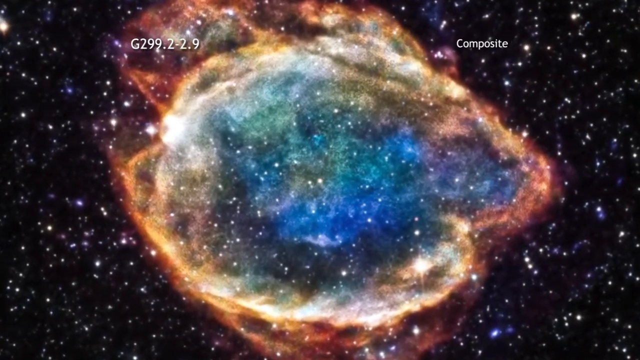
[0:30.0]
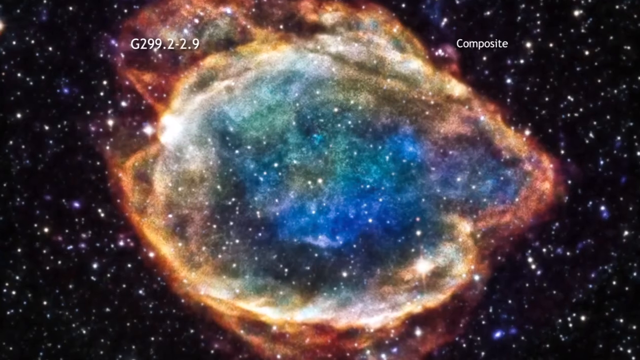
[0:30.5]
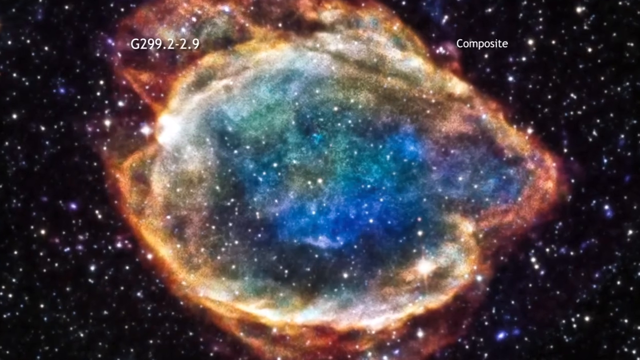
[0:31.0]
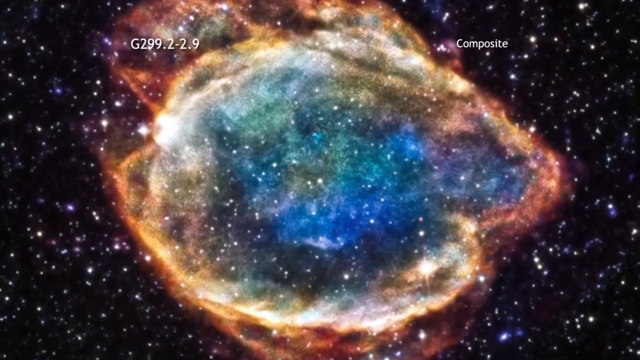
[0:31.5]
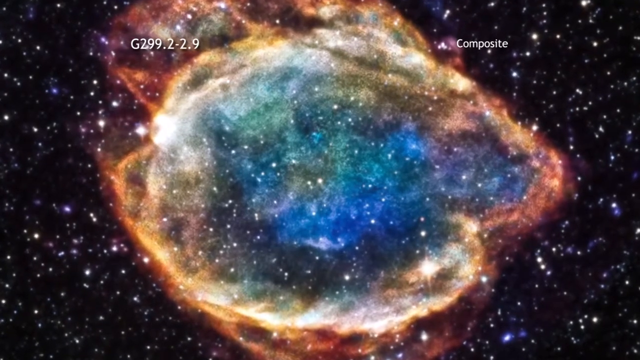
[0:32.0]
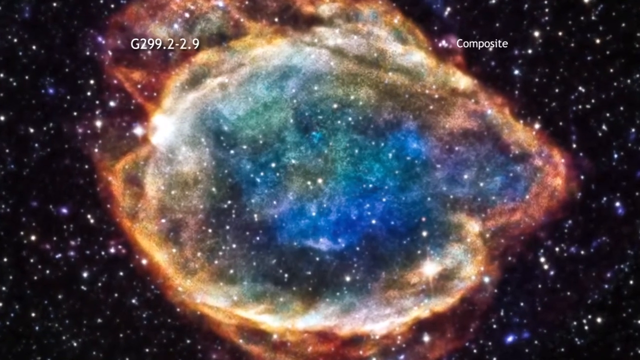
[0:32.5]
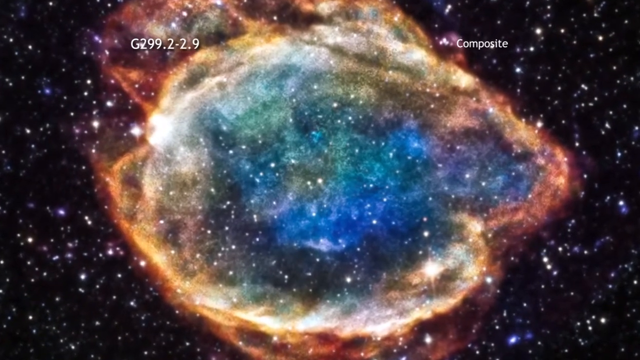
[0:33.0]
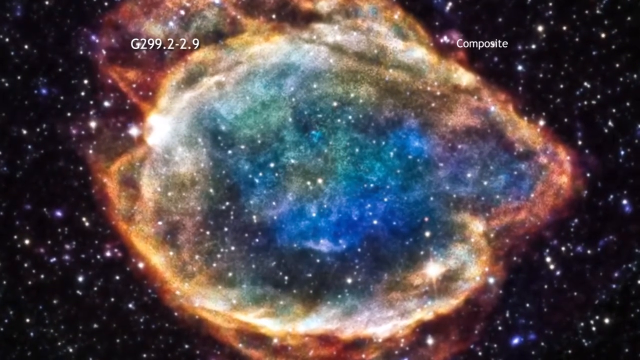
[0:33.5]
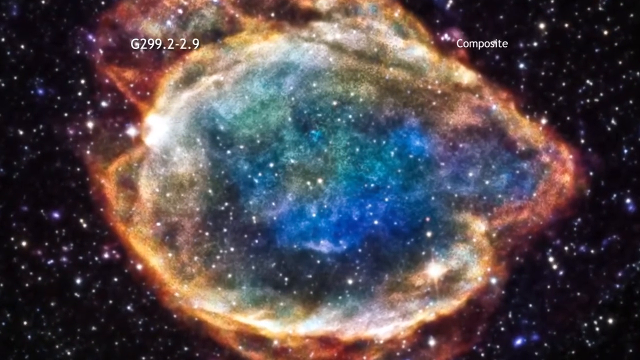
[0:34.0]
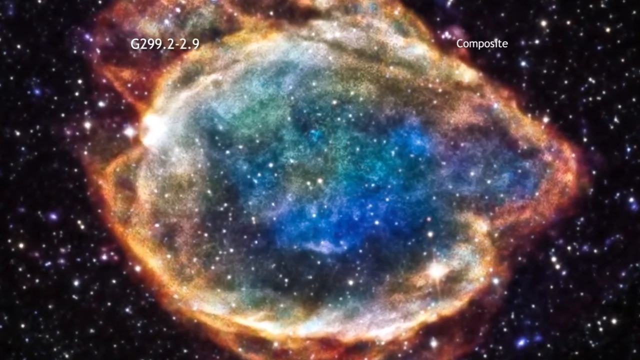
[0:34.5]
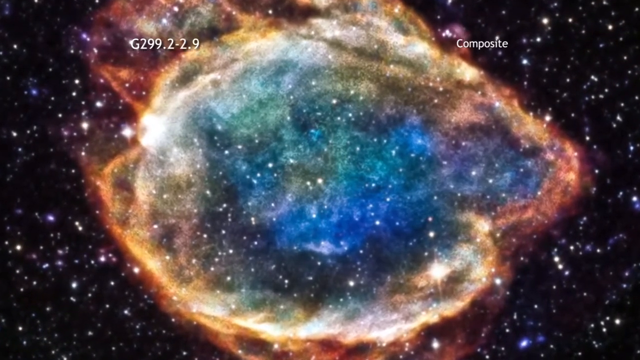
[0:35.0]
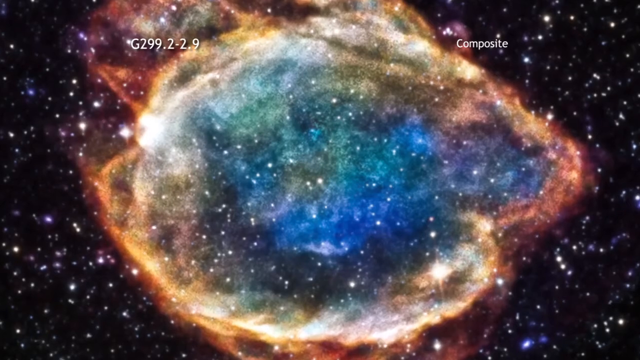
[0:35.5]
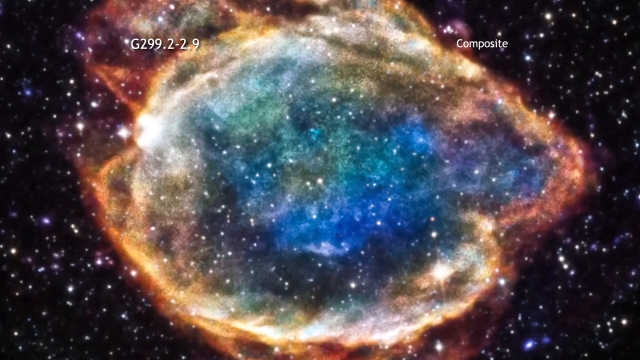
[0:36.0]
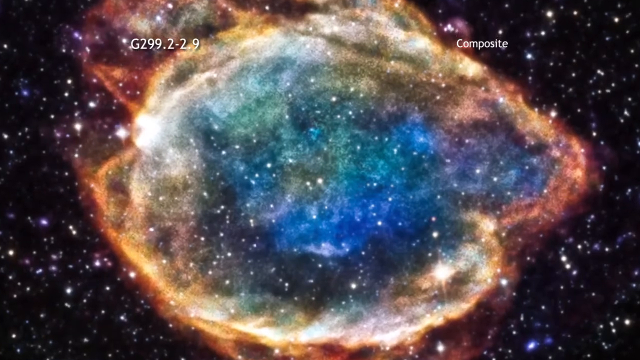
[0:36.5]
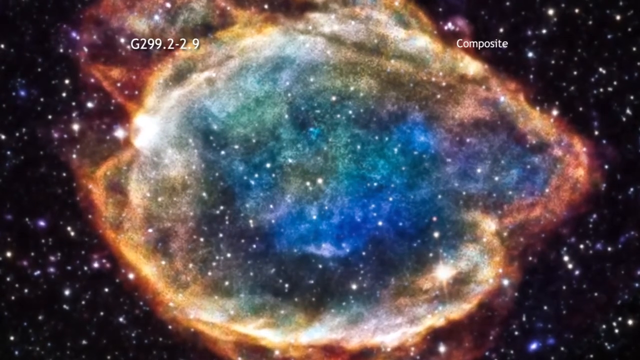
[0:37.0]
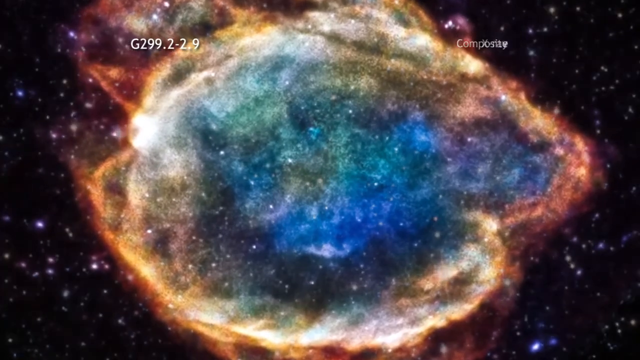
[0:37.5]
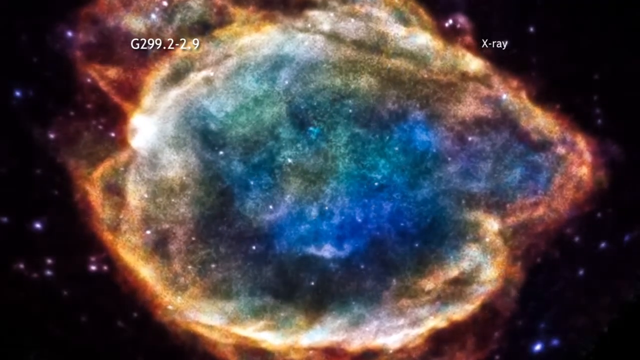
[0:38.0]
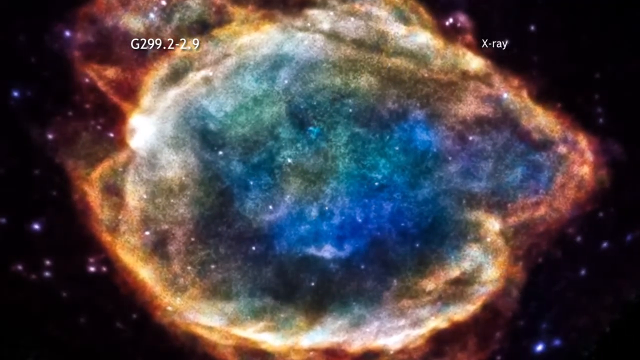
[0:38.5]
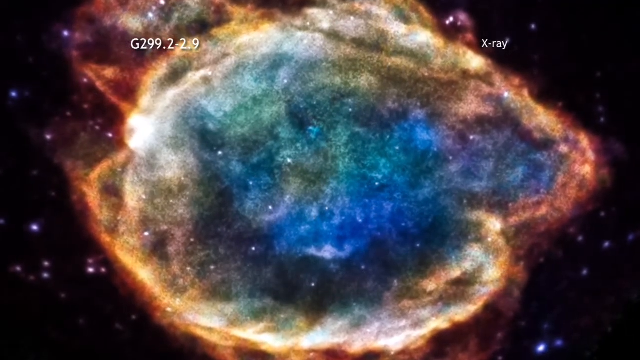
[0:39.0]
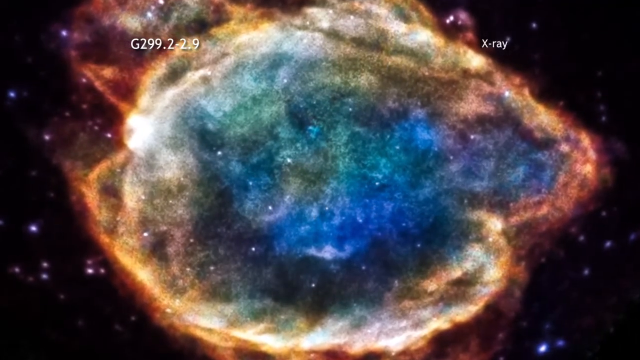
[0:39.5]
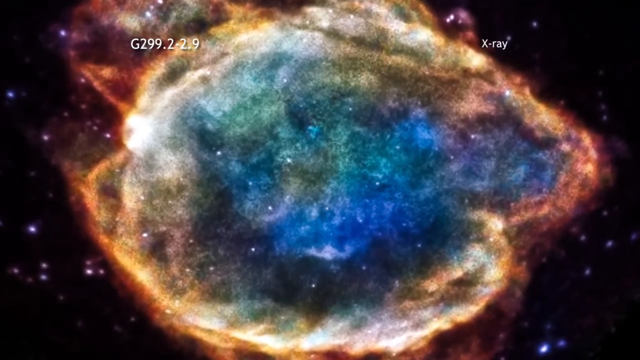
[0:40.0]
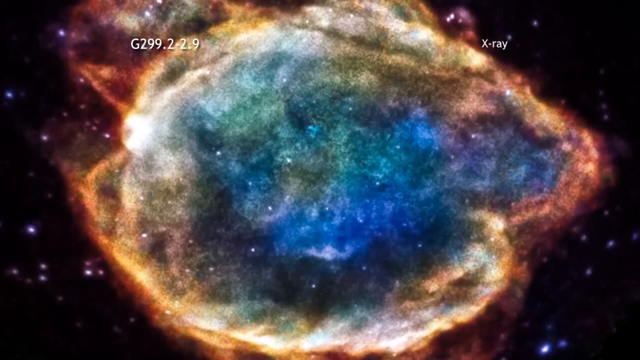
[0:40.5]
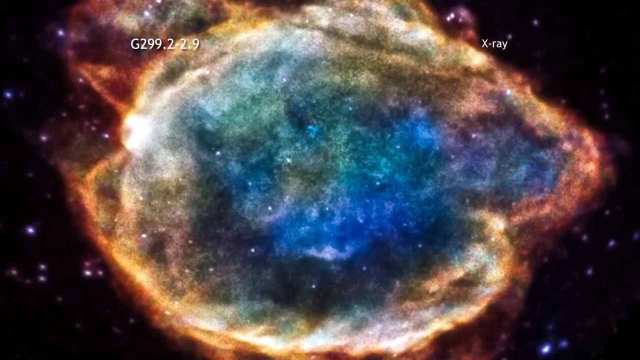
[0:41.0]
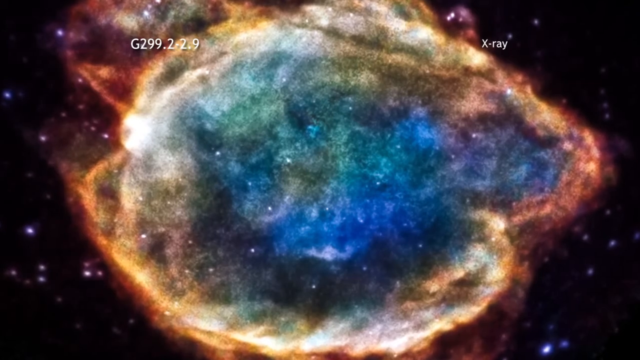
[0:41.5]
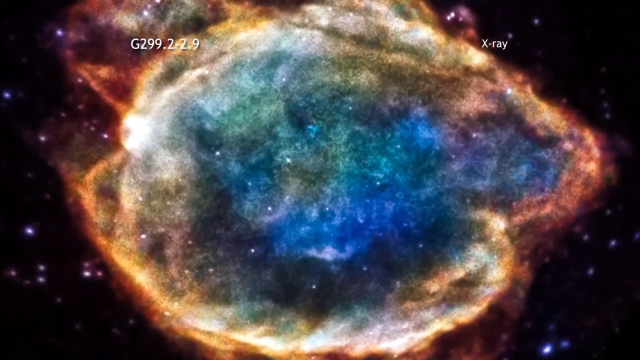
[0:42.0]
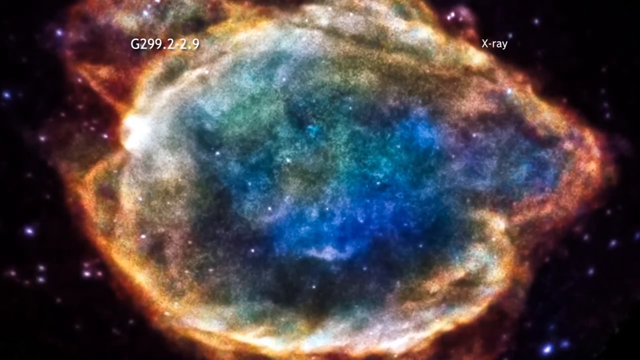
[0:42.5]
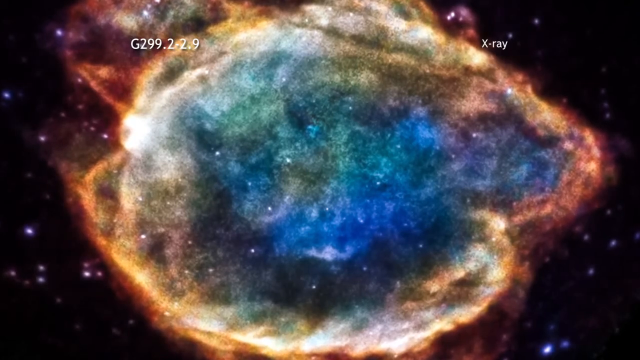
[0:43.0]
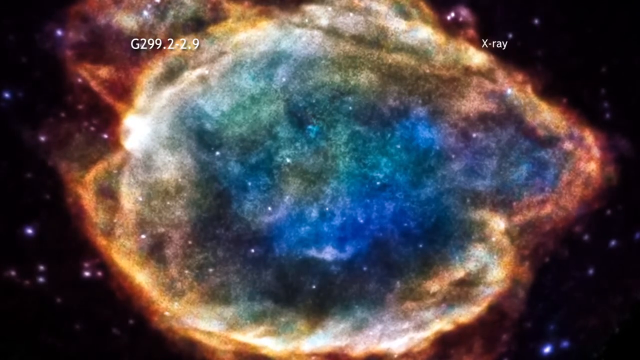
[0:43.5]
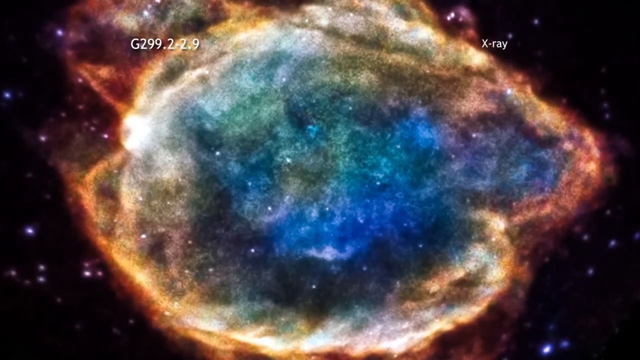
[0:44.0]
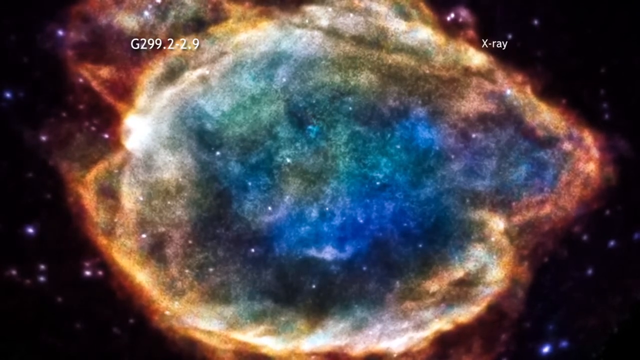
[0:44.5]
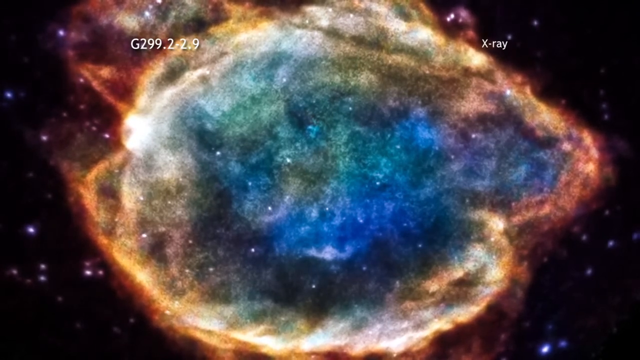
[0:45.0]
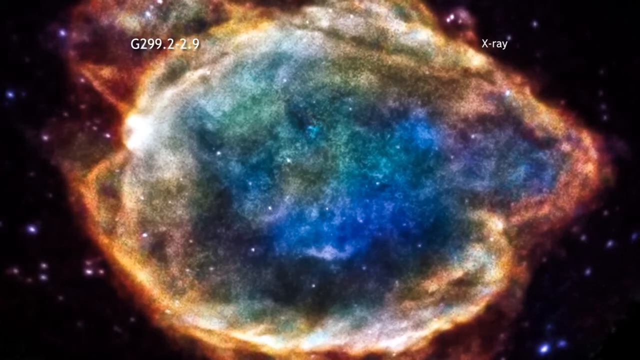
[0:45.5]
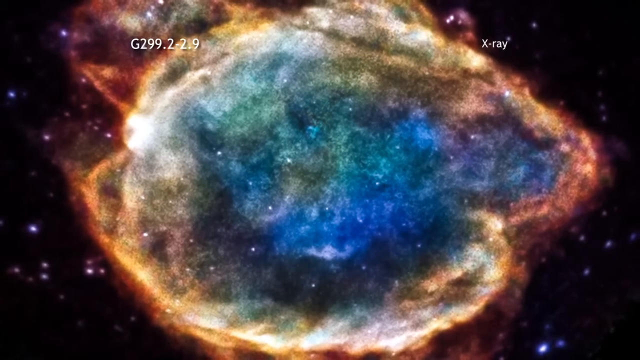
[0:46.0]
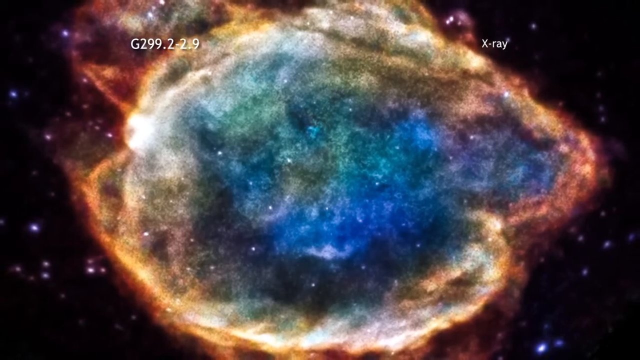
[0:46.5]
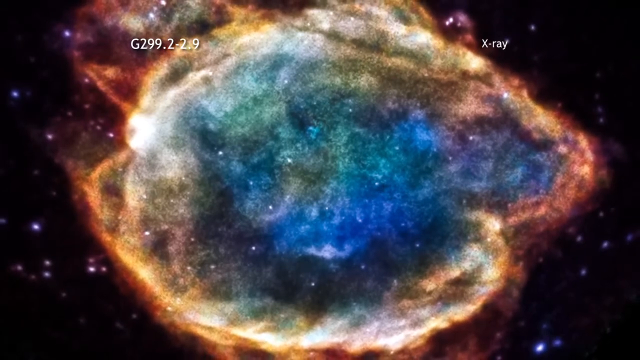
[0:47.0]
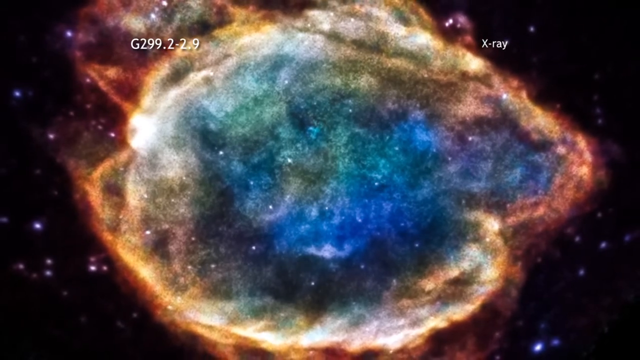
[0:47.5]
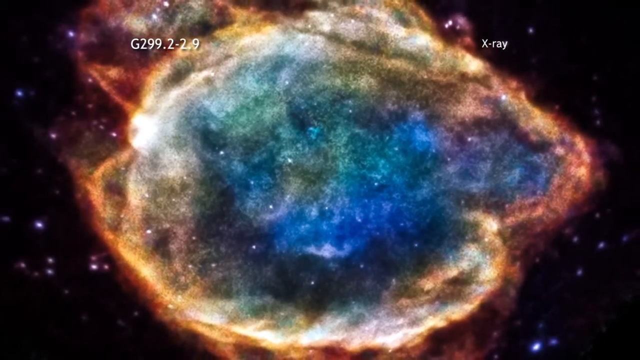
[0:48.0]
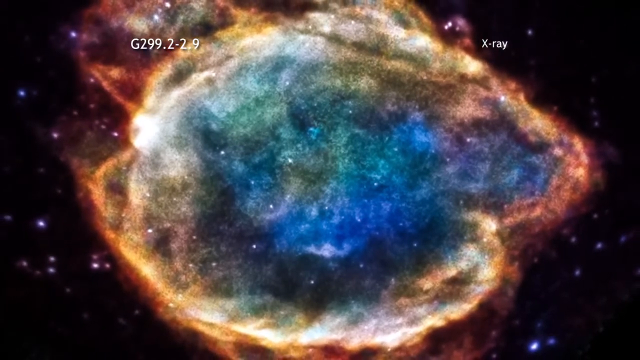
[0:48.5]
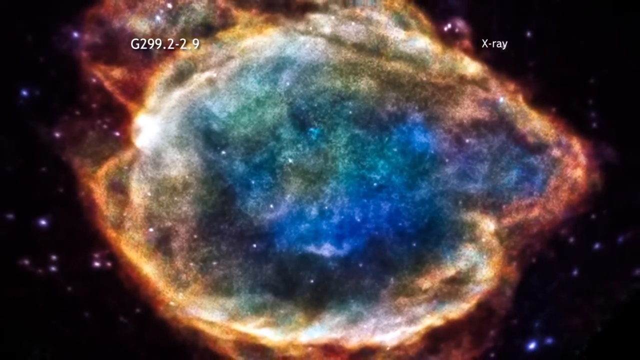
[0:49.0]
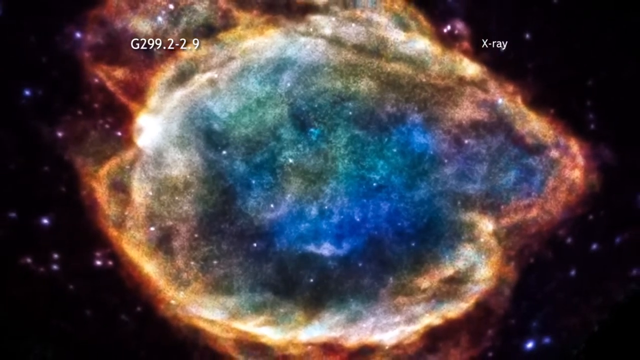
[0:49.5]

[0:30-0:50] A black sky filled with stars has a blue and green area in the center, surrounded by a ring of yellow and then red on the outside; it all looks like a cloudiness on top of the starry background. White text in the upper left reads "G299.2-2.9", and small white text on the upper right side reads "composite". The view zooms in further on the cloudy area, then slowly zooms back out. There is a really bright area in the bottom right of the yellow part and a very bright part in the upper left of the yellow part. Just below center on the right, a row of three stars sits very close together, and up and to the right of that a white star and a blue star are very close together. In the upper left corner of the screen, another star is brighter and larger than the others.